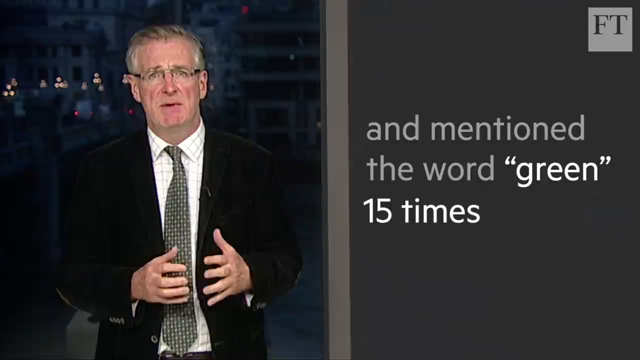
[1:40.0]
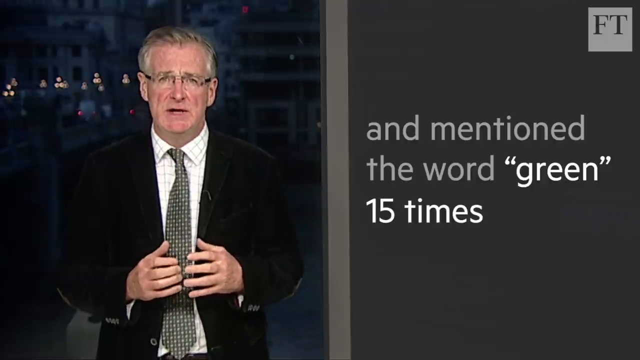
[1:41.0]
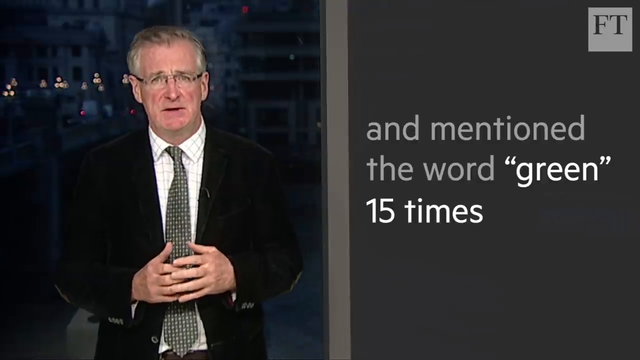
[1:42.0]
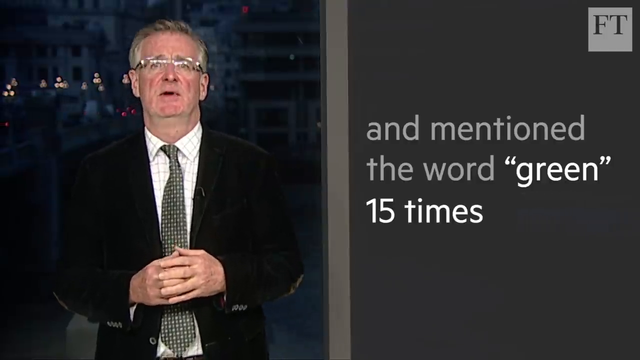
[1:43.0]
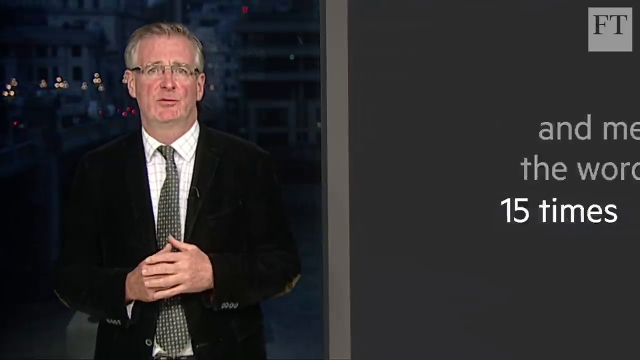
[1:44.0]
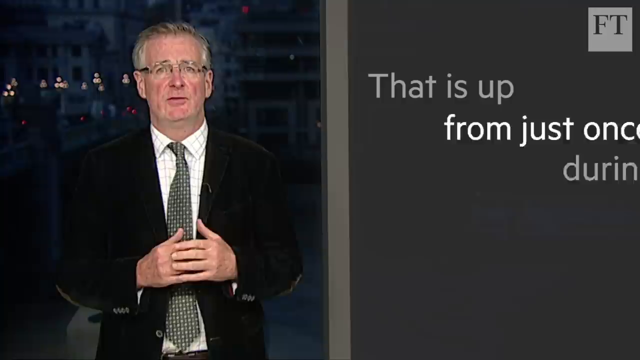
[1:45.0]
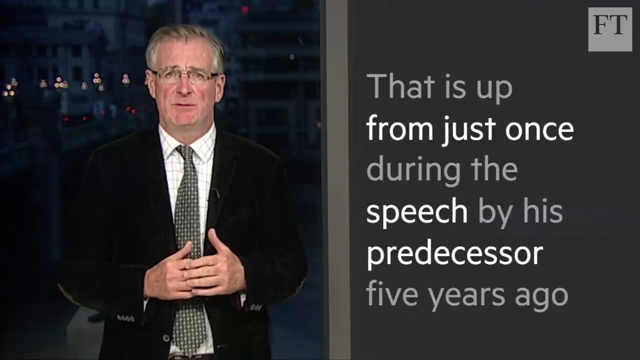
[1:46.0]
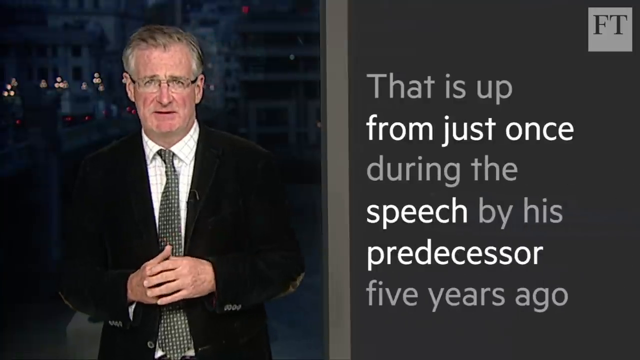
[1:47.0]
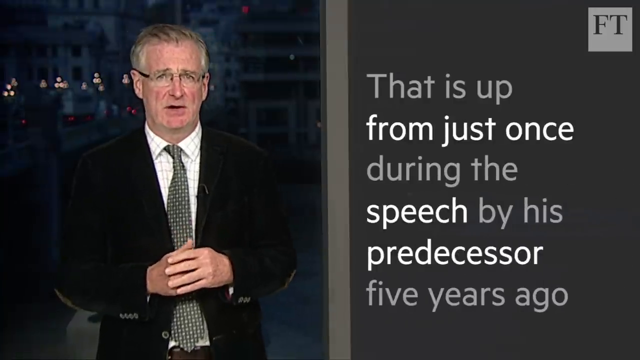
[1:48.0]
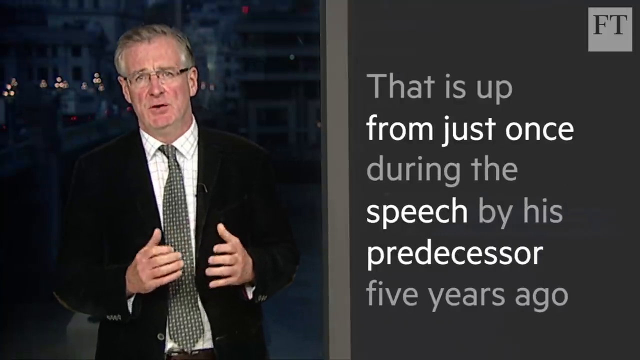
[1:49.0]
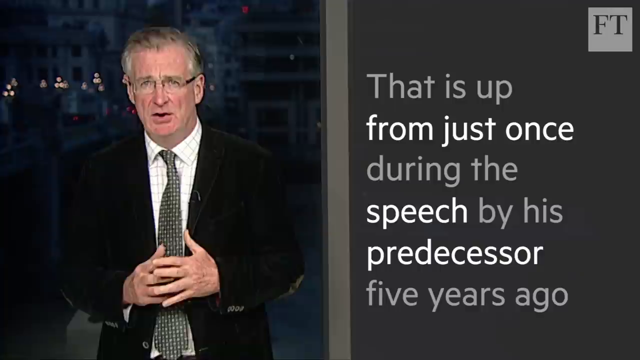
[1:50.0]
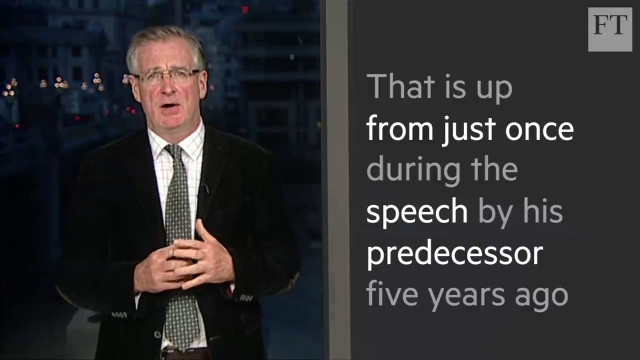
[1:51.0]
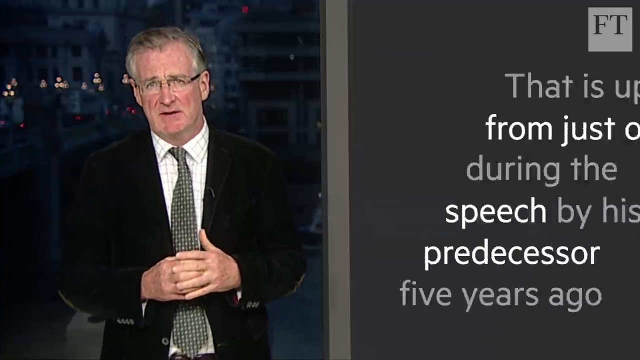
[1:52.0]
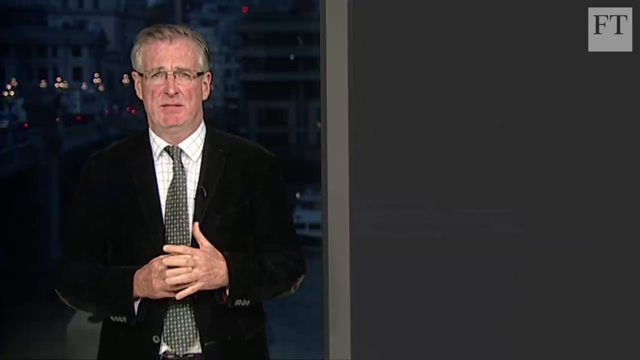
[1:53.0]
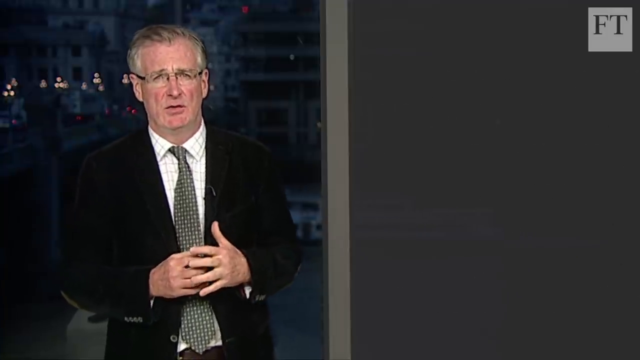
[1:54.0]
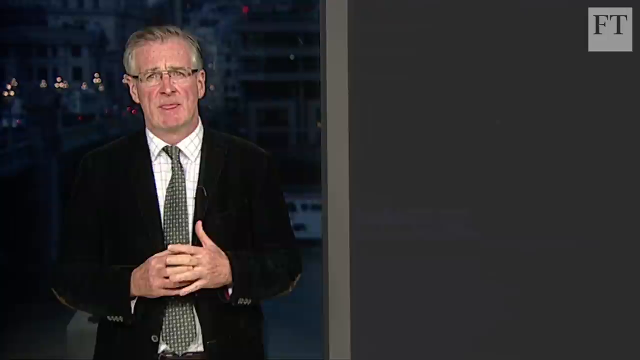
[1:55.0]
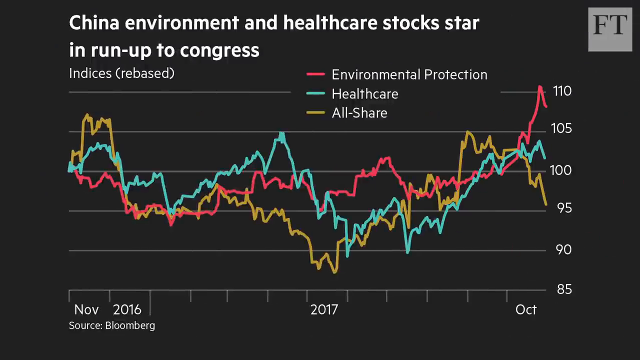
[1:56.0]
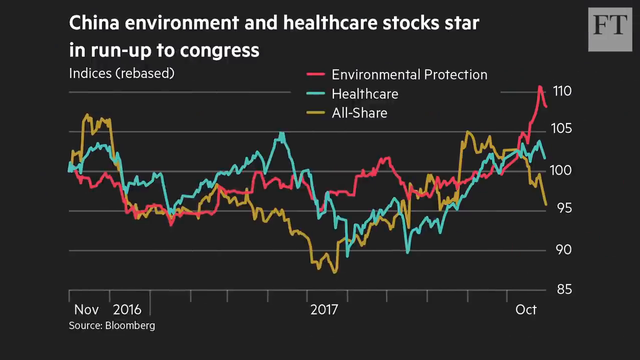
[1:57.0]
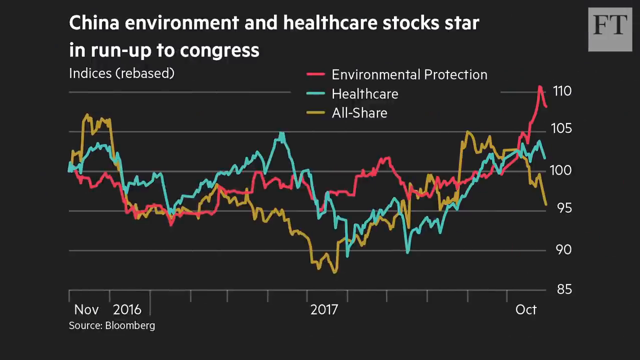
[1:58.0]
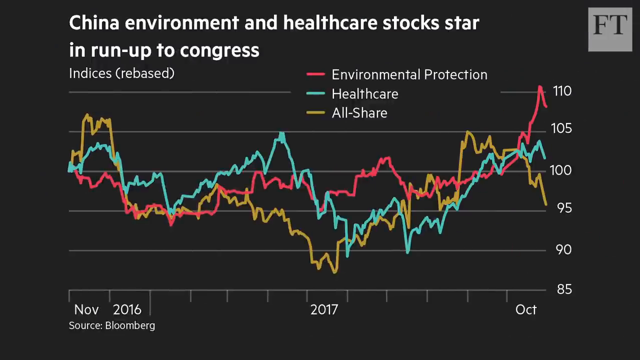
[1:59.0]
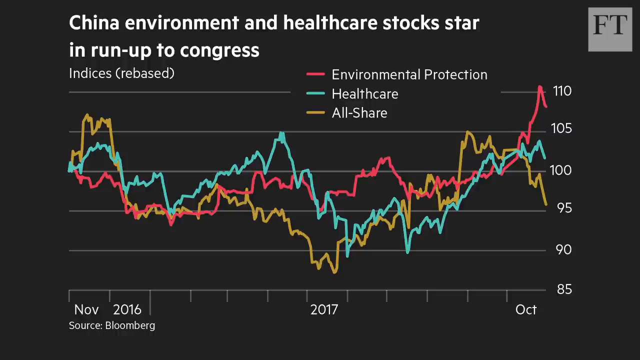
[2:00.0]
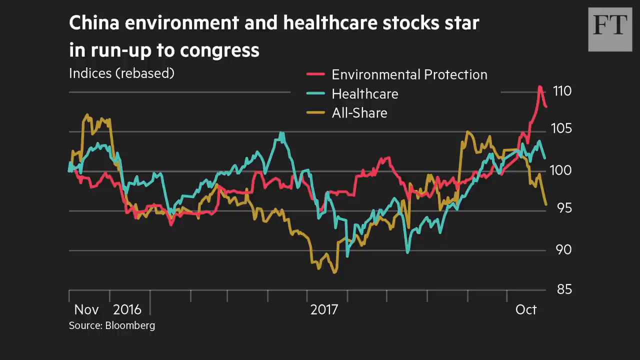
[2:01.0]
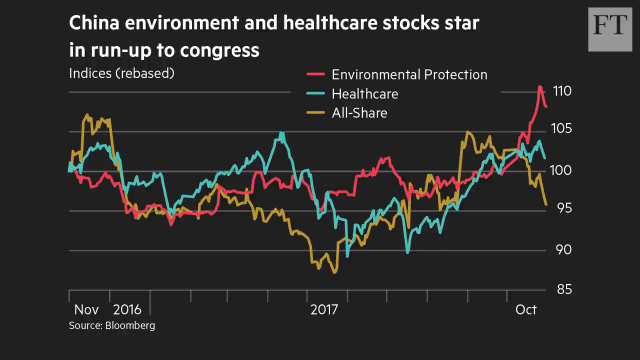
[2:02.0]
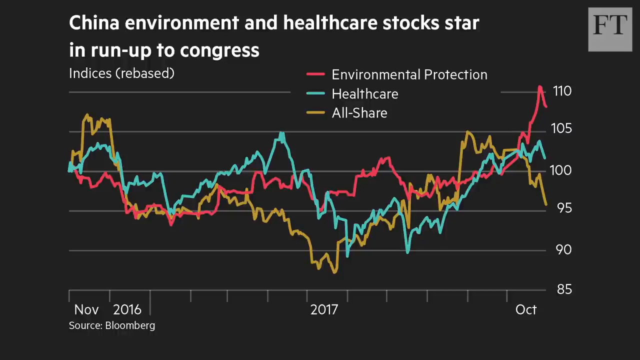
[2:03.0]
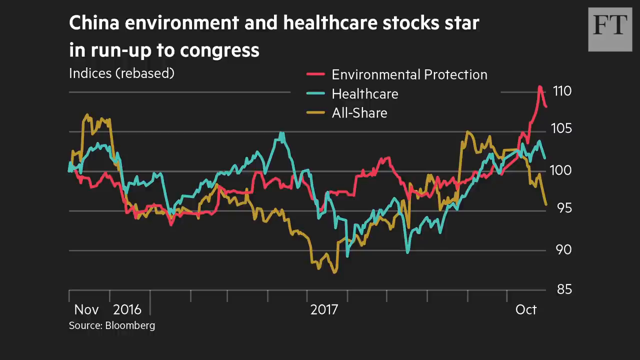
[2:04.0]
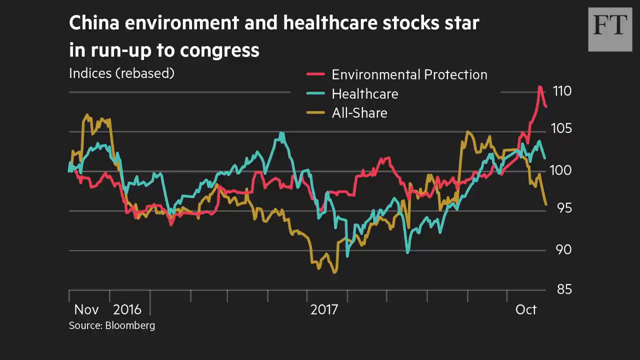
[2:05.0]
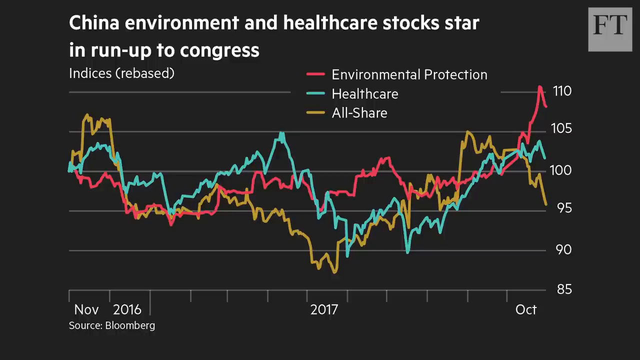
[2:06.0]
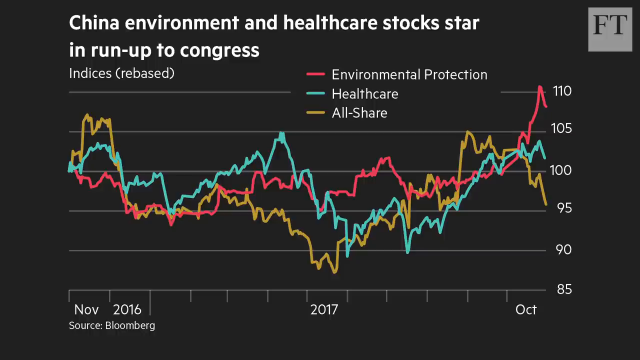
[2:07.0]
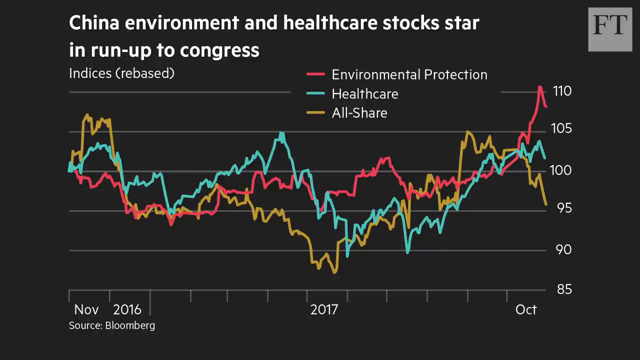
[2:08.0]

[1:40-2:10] The newscaster stands on the left-hand side of the screen speaking to the camera. The dark gray text box on the right says "and mentioned the word green 15 times." It changes to read "that is up from just once during the speech by his predecessor five years ago." As the man continues to address the camera, the text box disappears and a graph appears against a black background. At the top, in white, it says "China environment and healthcare stocks star in run-up to Congress." Underneath on the left it says "indices rebased." Toward the center right are labels: a red line for "environmental protection," below it a green line for "healthcare," and below that a yellow line for "all-share." On the right-hand side, six lines go down the graph, numbered top to bottom 110, 105, 100, 95, 90 and 85. Gold, blue and red squiggles run across the graph, relating to the three labels. The bottom axis begins at November 2016, reaches 2017 in the middle and ends in October. Below that it says "source Bloomberg."